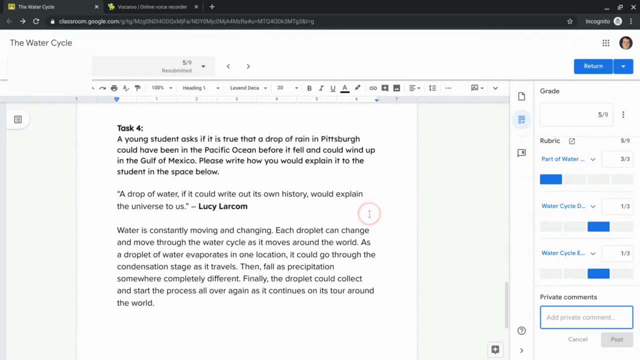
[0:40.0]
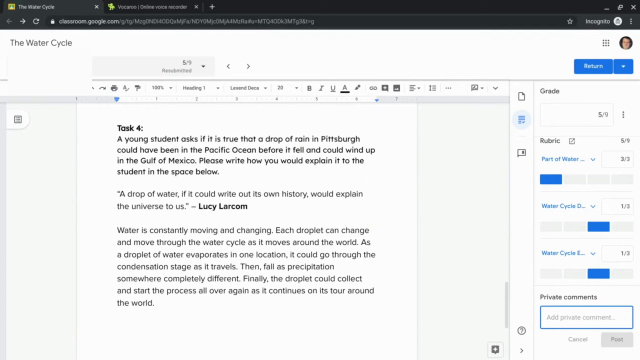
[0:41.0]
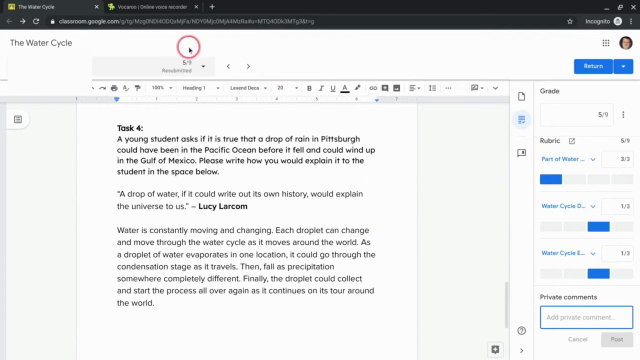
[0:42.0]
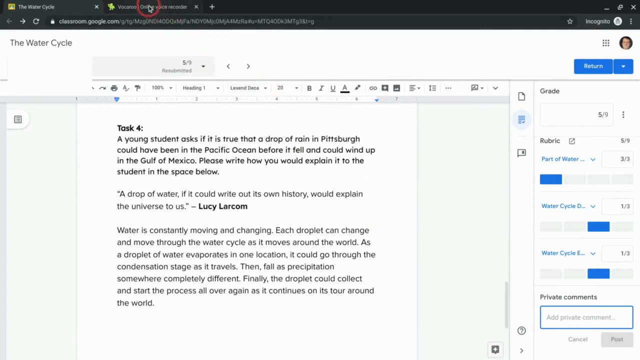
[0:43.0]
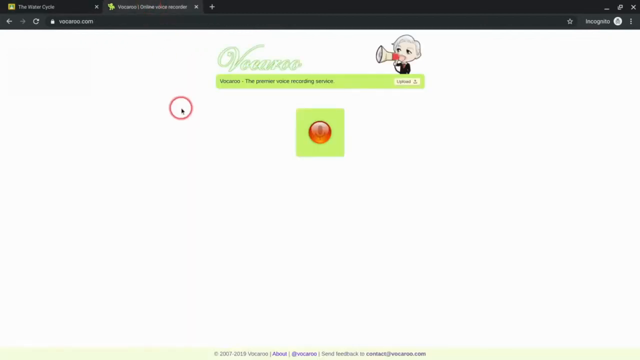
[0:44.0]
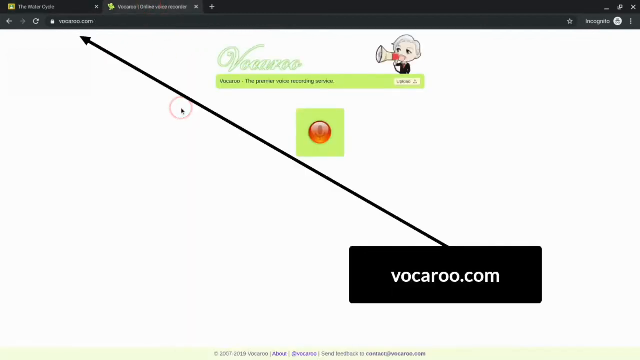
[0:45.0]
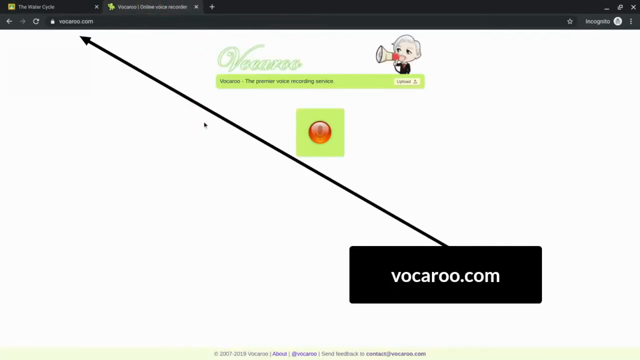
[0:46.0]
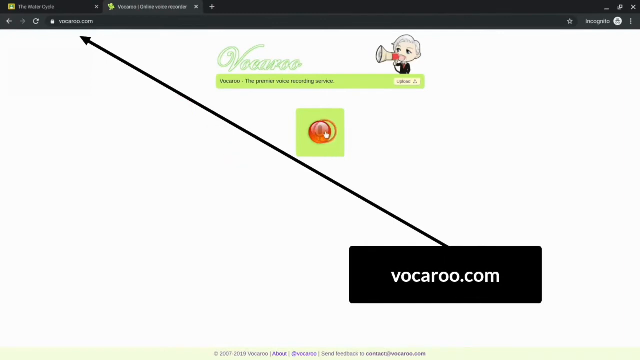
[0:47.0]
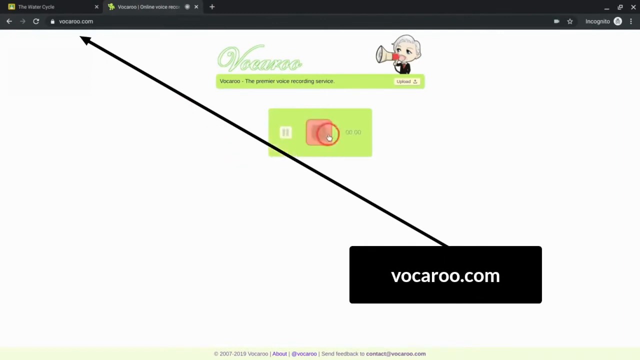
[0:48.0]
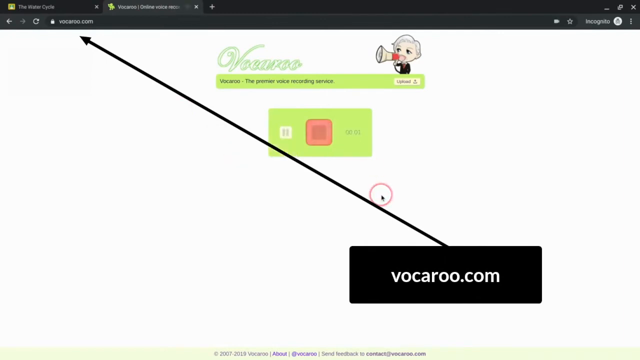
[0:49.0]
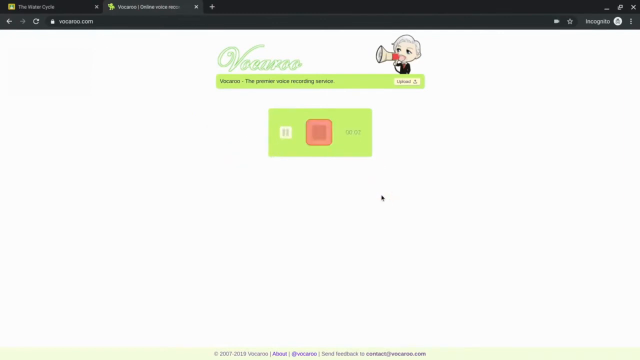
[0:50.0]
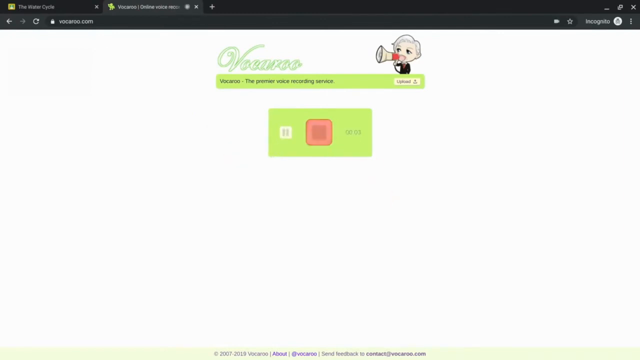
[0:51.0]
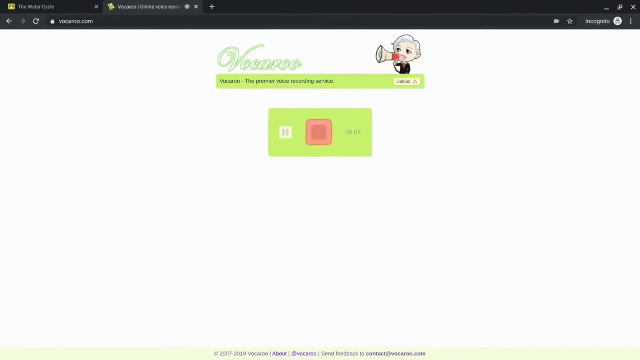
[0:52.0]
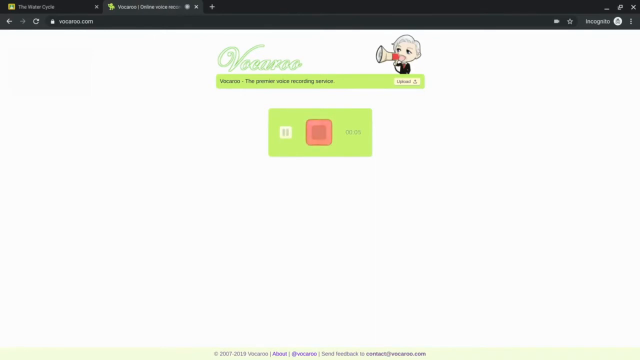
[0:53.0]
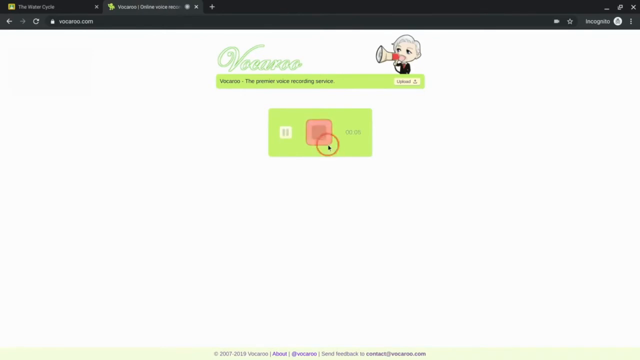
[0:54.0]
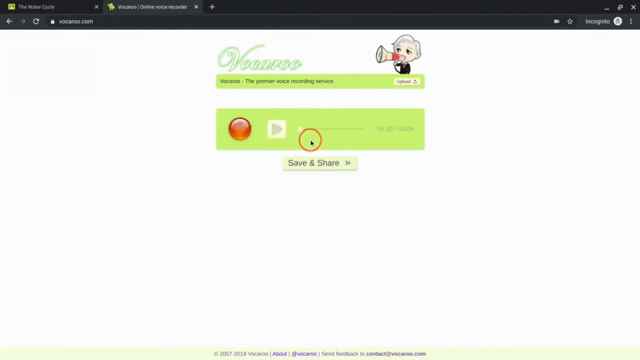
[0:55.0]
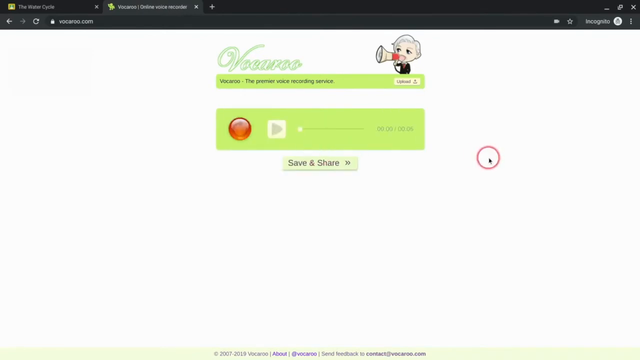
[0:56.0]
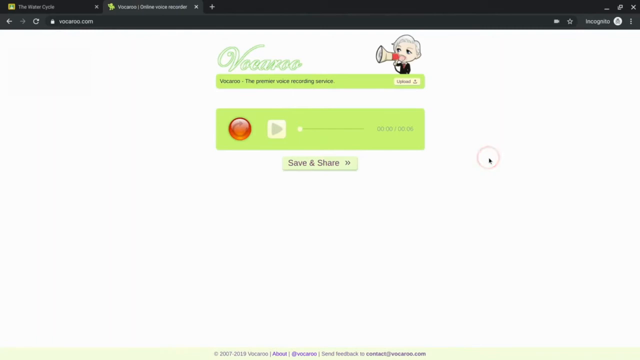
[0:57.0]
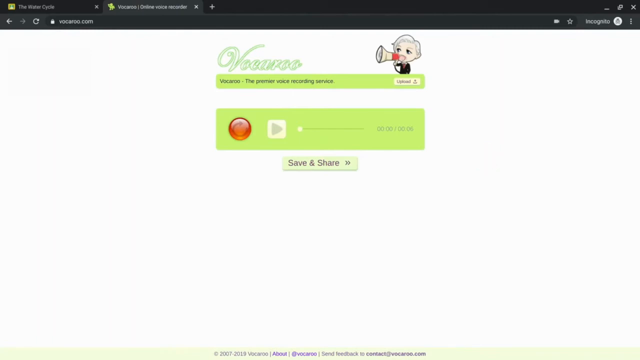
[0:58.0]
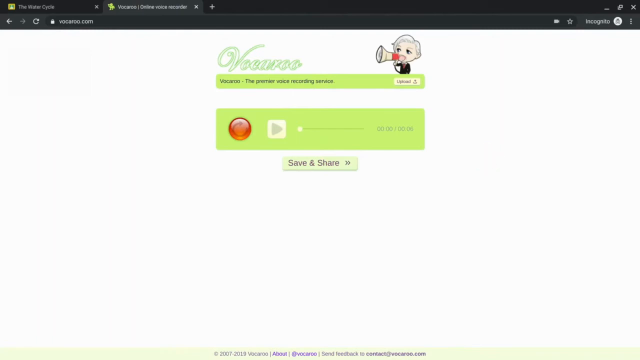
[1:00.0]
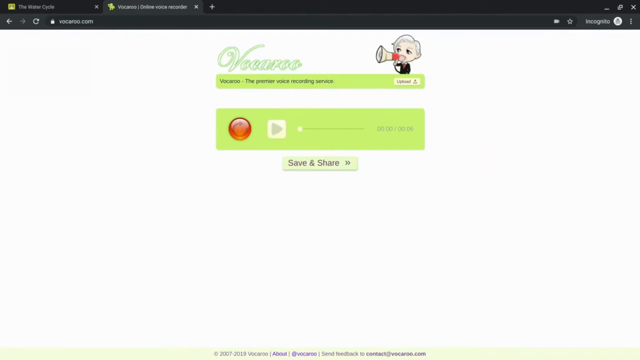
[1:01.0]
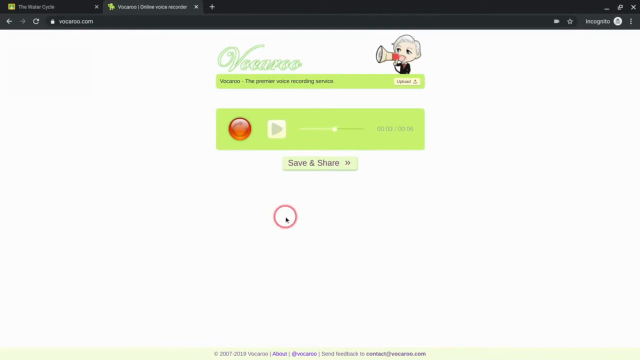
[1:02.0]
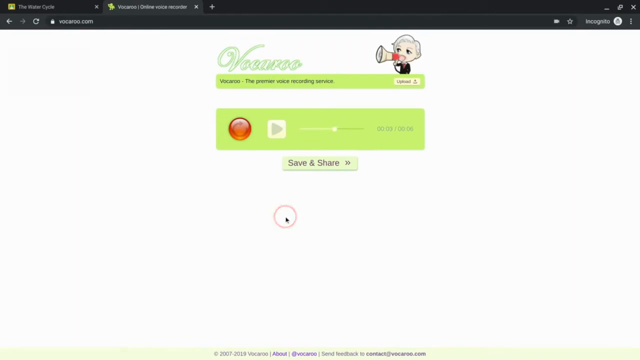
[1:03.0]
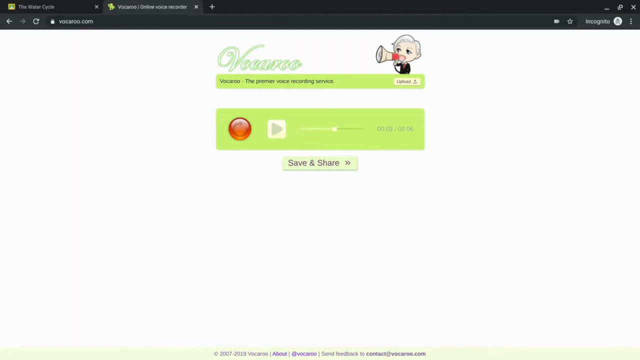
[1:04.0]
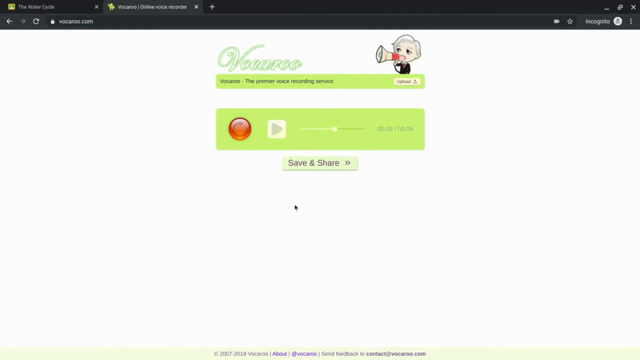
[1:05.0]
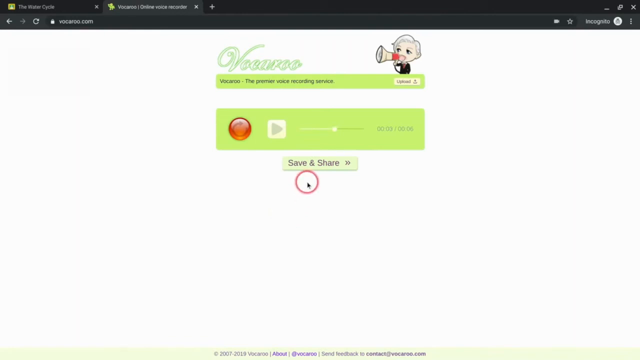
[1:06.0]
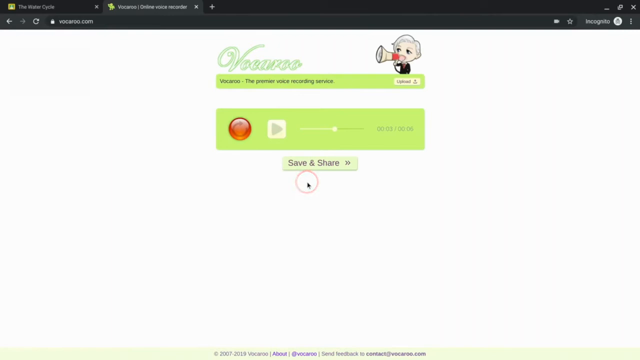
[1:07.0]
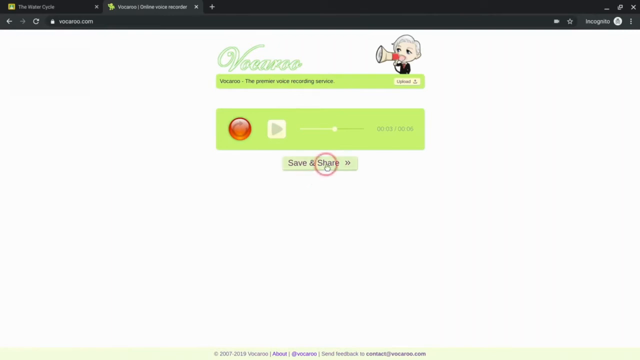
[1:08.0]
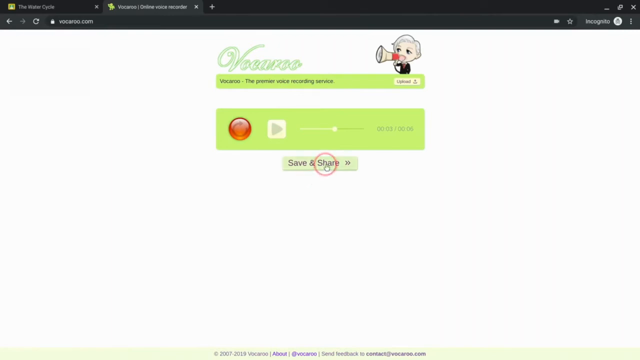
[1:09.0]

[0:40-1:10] The text document stays on screen with the toolbar editor on the right. The mouse moves to the top of the screen and selects a different open tab in the browser. This website has green text reading "vocero.com" and a mostly blank white page with a green object in the center and a red button on top of it. The mouse hovers over the red button and clicks it; a pause button appears to its left and a timer to its right, and the red button flashes red and white. The mouse clicks the red button again, and this time a play button appears along with a timer with a bar on the right side. Below it, new text appears that says "save and share." The mouse moves down the screen and hovers over "save and share."